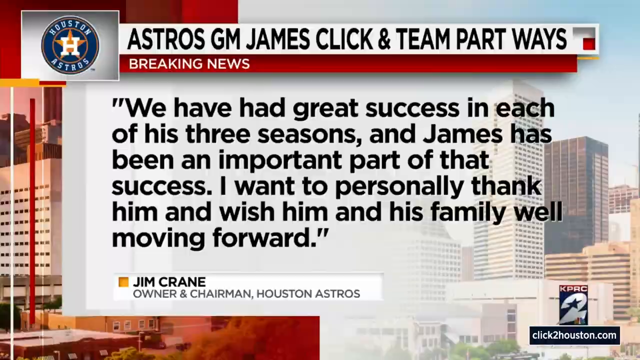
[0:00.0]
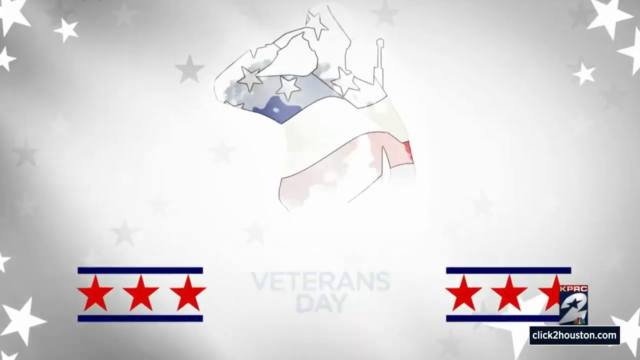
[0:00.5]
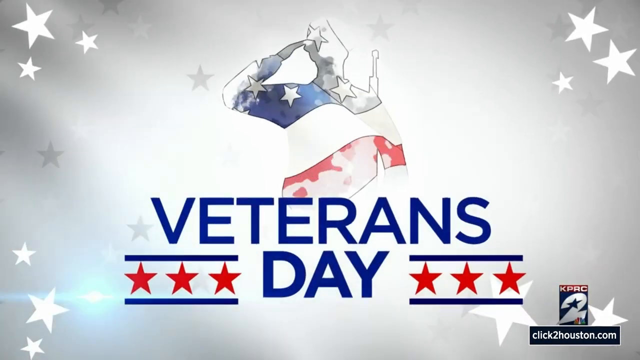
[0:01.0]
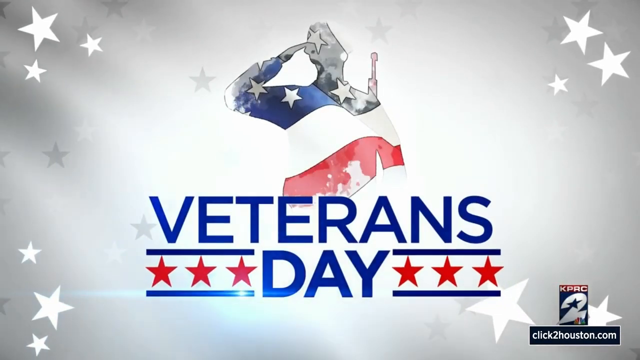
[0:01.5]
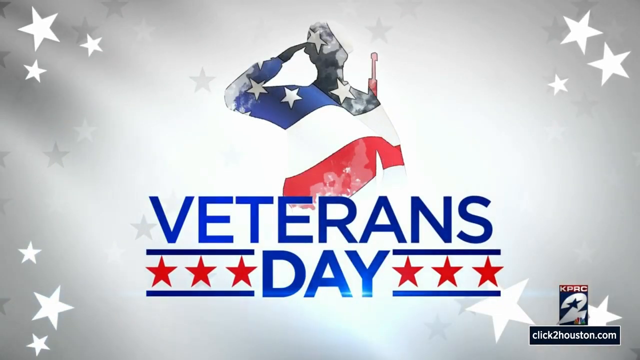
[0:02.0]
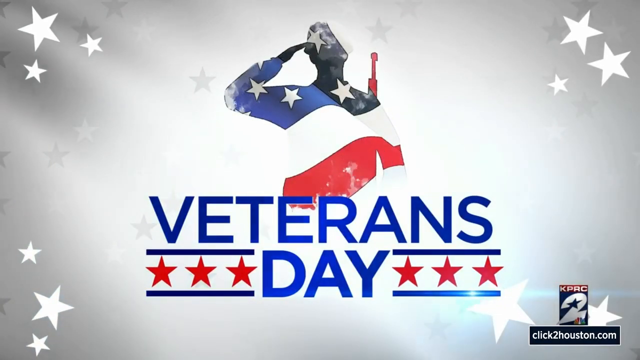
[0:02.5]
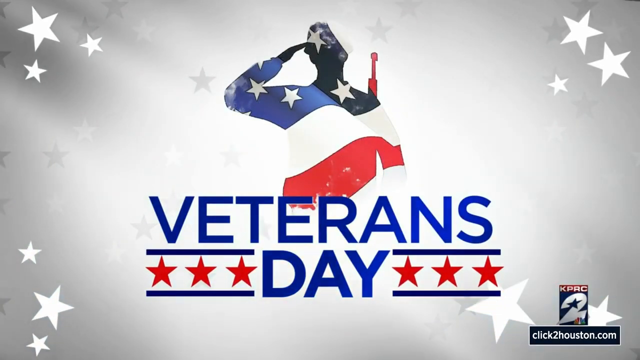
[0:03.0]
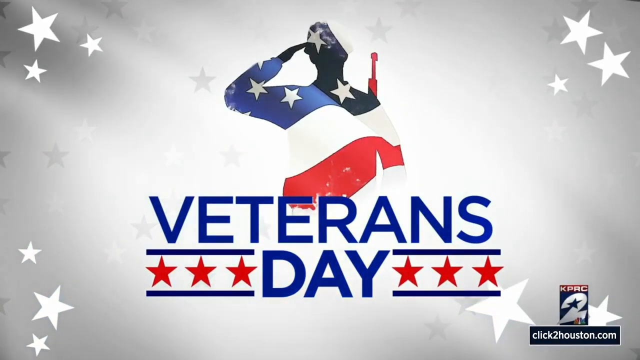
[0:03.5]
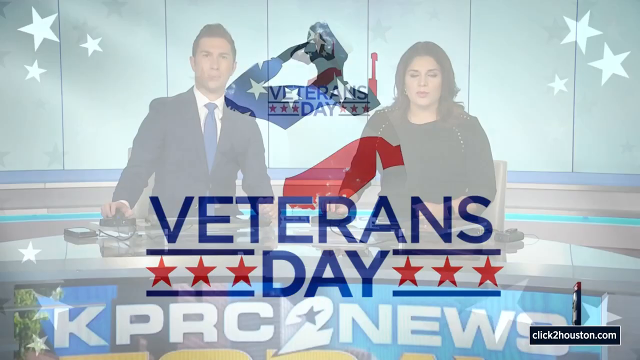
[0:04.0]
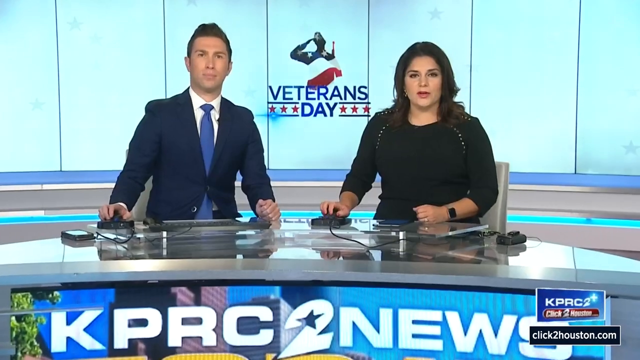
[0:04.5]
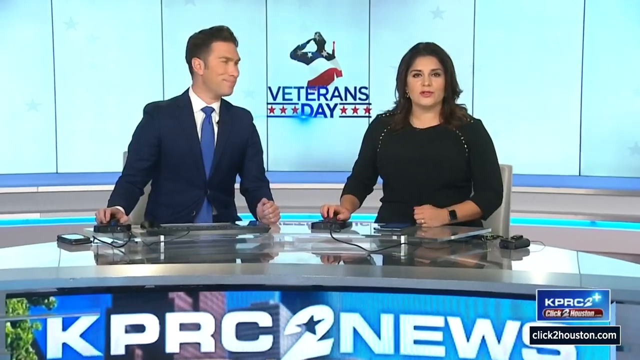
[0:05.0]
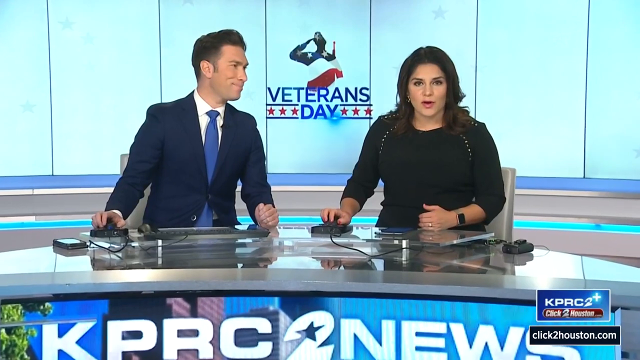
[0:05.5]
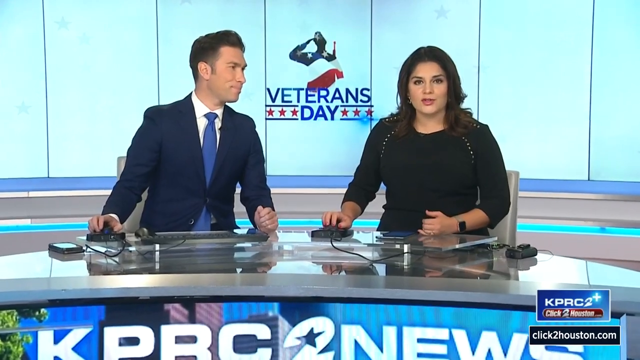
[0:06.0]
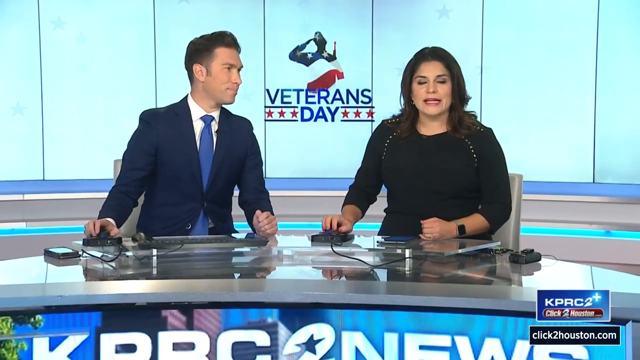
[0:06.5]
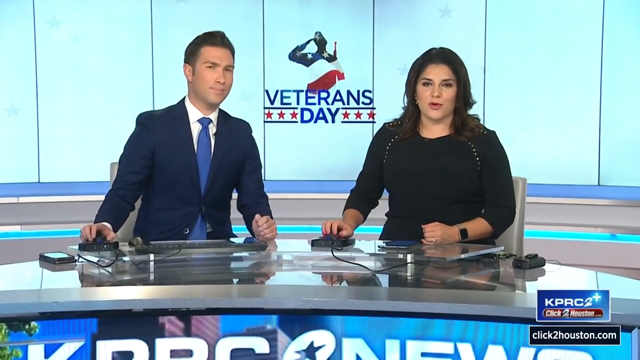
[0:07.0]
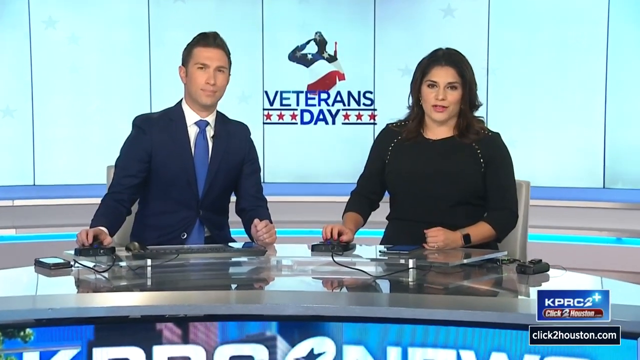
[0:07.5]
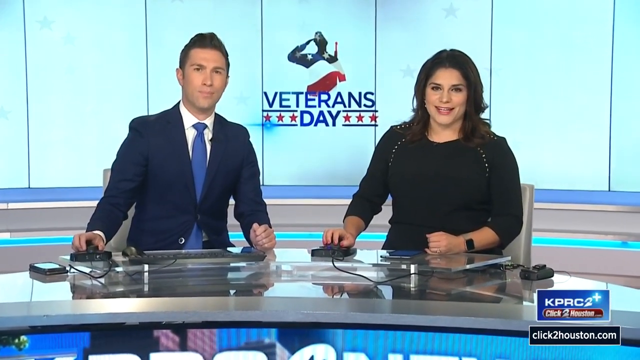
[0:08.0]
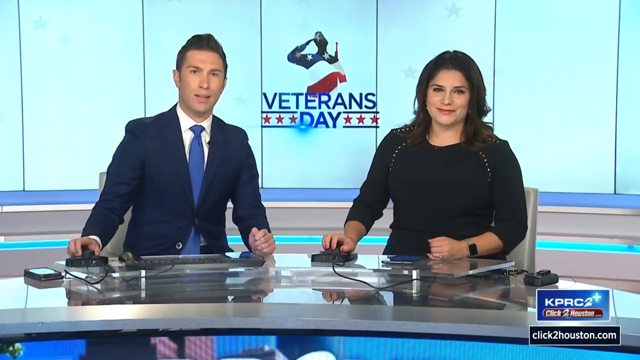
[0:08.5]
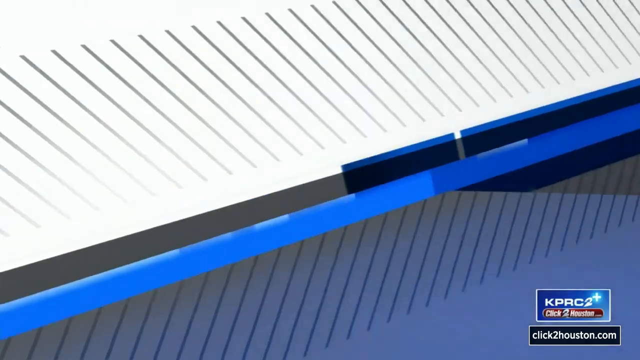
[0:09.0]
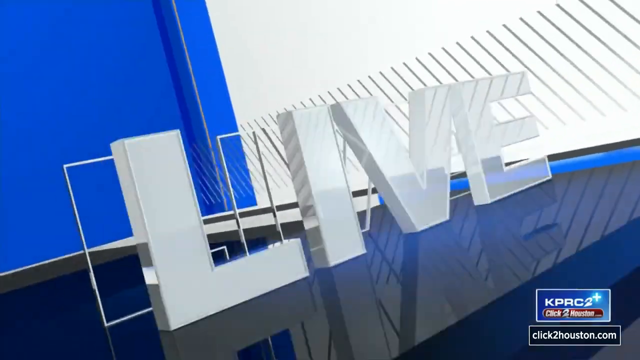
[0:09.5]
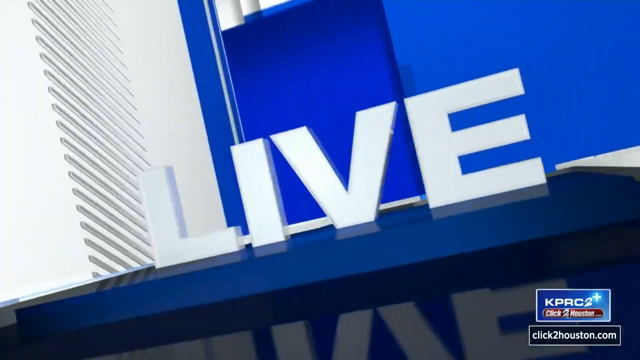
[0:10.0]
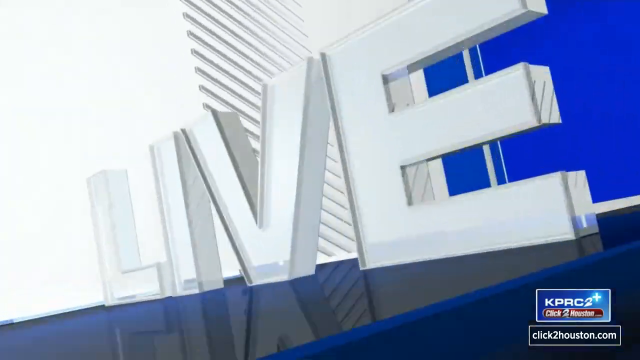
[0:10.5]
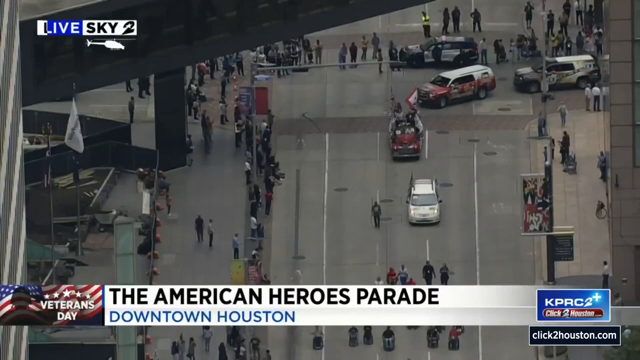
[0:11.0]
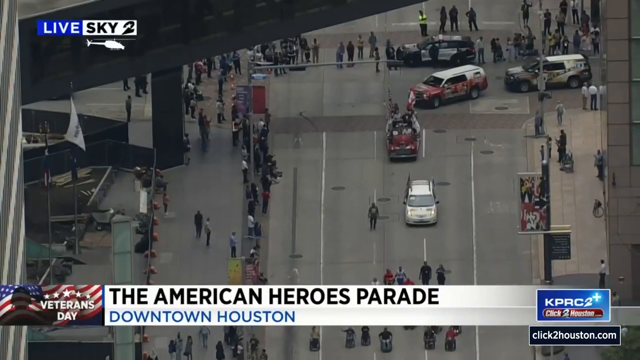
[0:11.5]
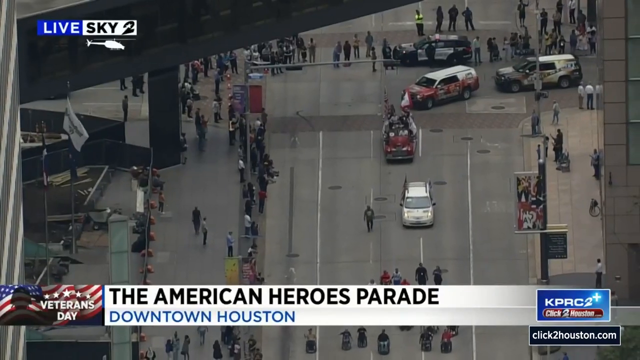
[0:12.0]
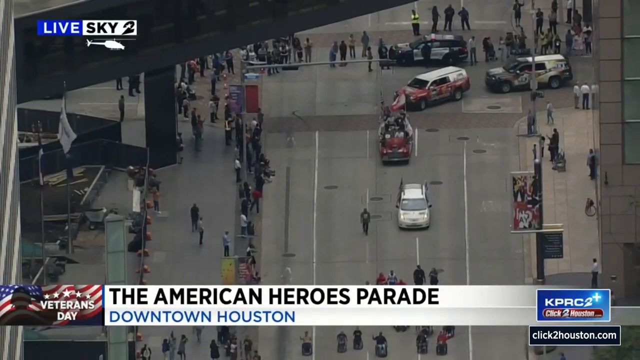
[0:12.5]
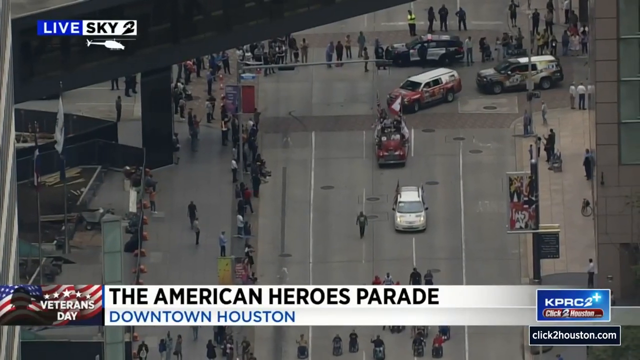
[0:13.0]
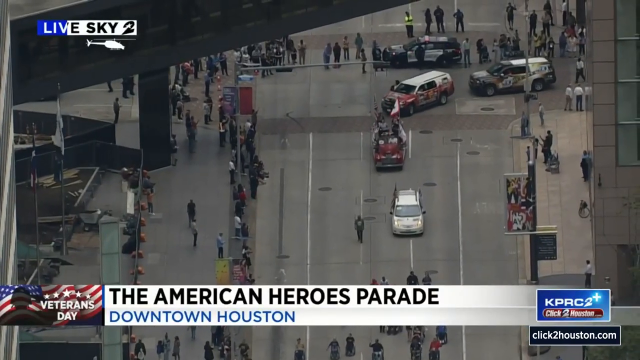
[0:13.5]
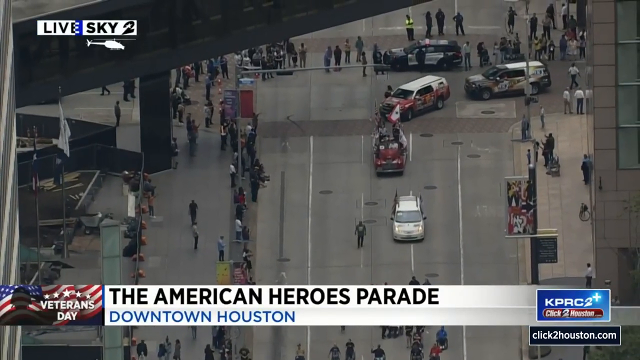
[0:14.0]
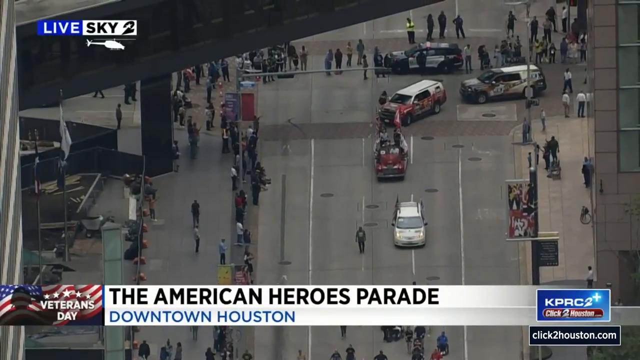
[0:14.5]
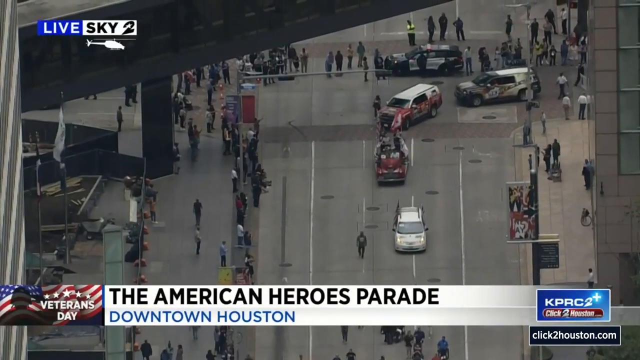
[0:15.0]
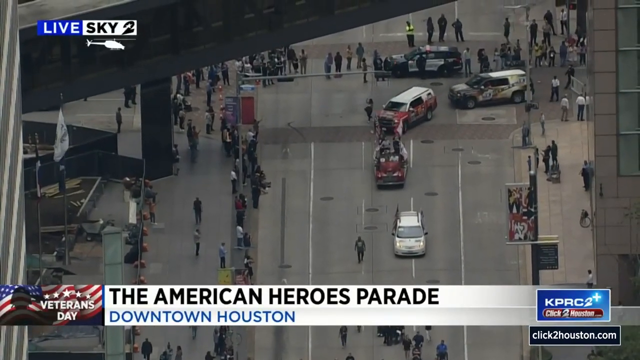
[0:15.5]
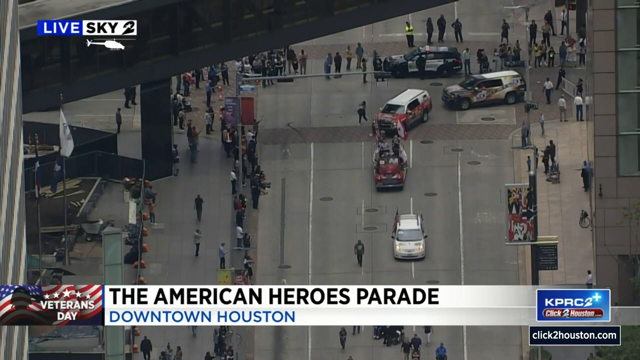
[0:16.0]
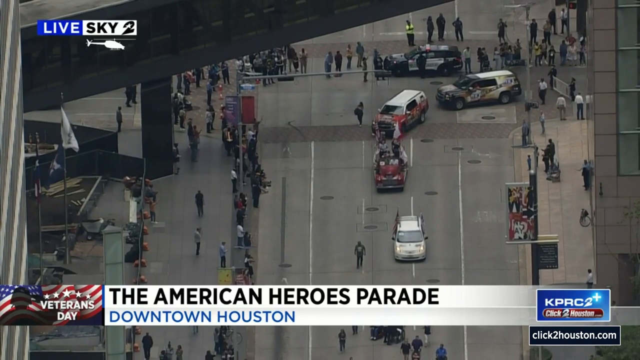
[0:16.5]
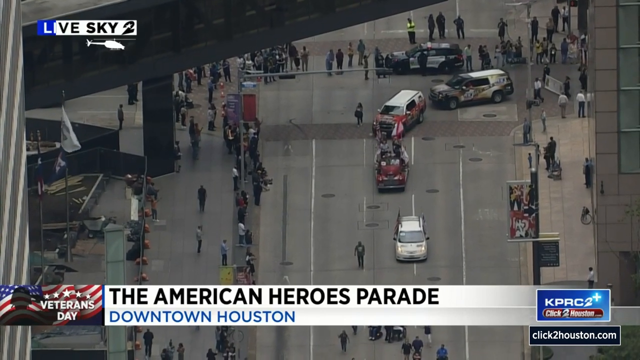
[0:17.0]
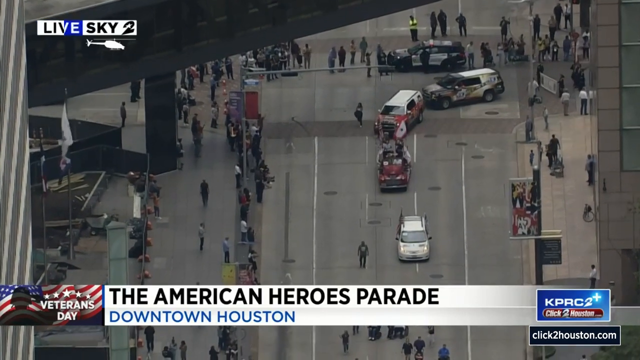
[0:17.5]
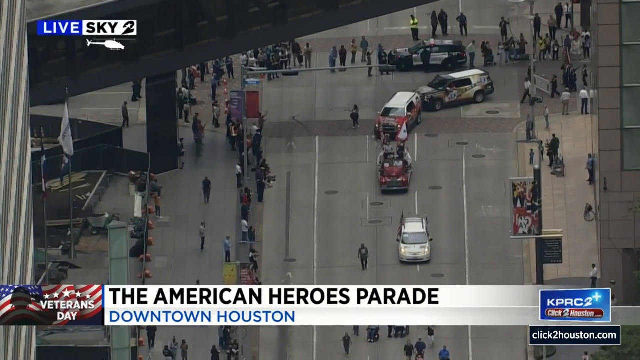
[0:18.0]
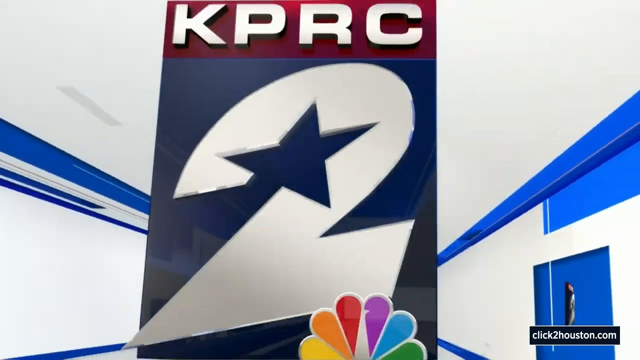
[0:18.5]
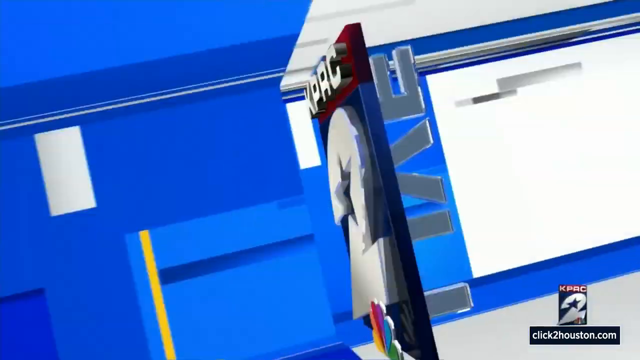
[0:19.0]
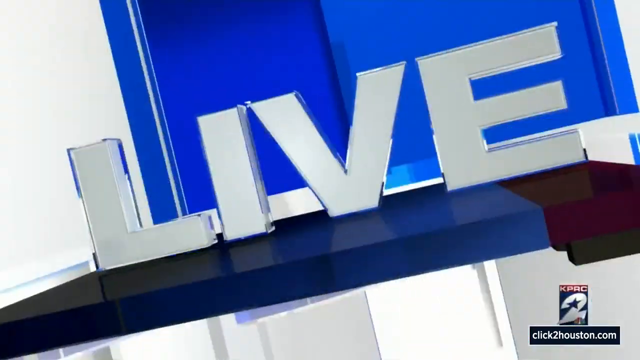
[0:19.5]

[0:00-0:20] The video is a Houston news broadcast. The channel logo, the number two with KPRC, appears in the corner, and "click to houston.com" is in the bottom right-hand corner. At the top of the screen is the Houston Astros logo, with a graphic styled as though a quote is being narrated off screen. A white banner with black text at the top says "Astros GM, James Click, and team part ways, breaking news." Black text on a background of a city view reads "We have had great success in each of his three seasons, and James has been an important part of that success. I want to personally thank him and wish him and his family well moving forward." At the bottom it is attributed to "Jim Crane, owner and chairman of Houston Astros." The screen then wipes to a graphic celebrating Veterans Day with the silhouette of a soldier giving a salute; the white background is meant to look like a waving flag, and star graphics move over it. The scene moves into a newsroom where two newscasters, a man and a woman, are at a desk, with a large graphic wall showing the Veterans Day graphic behind them. The man wears a suit and a blue tie; the woman wears a black sweater.